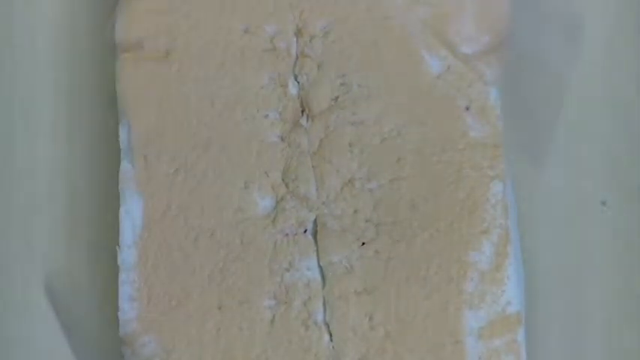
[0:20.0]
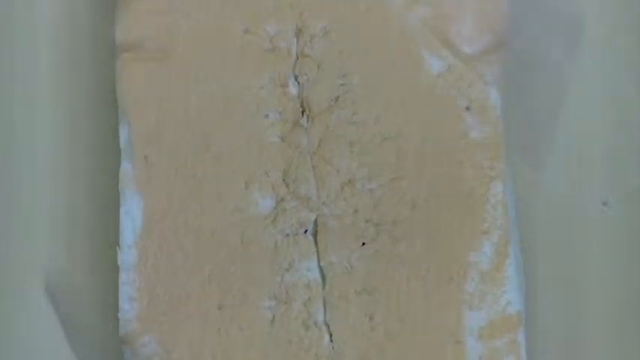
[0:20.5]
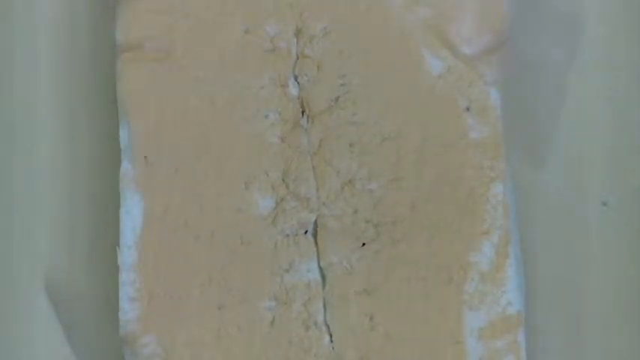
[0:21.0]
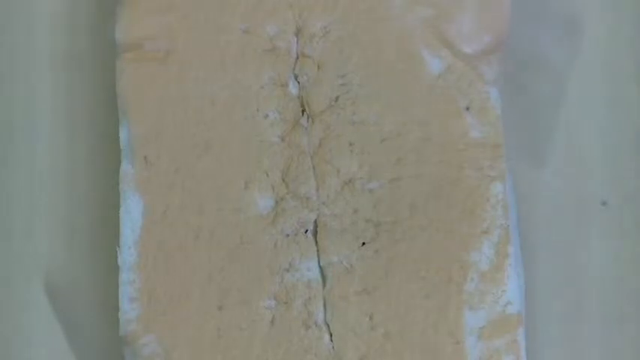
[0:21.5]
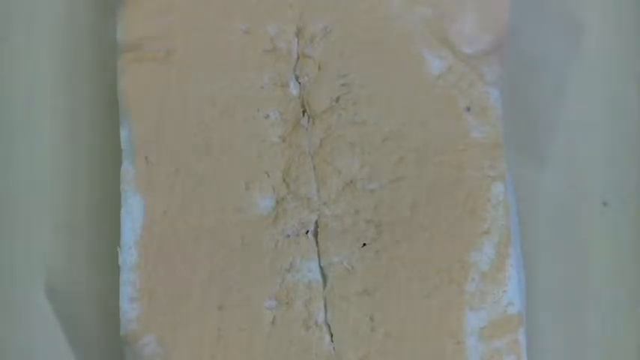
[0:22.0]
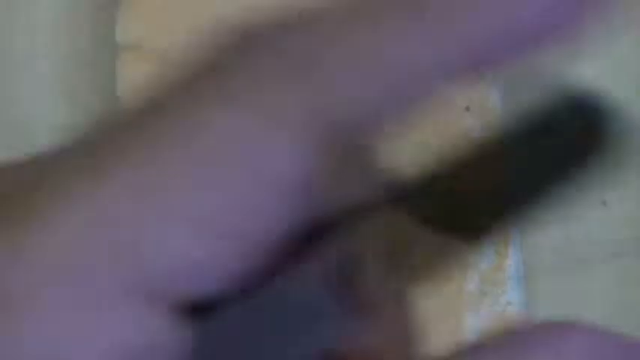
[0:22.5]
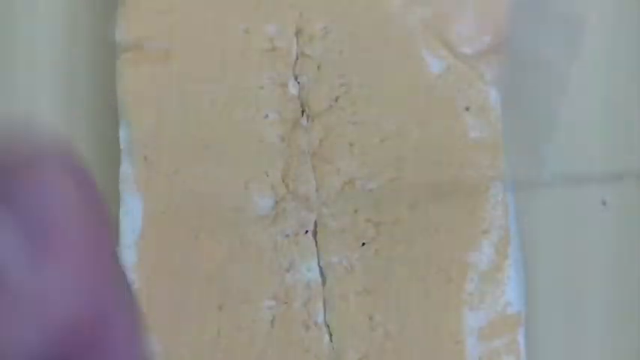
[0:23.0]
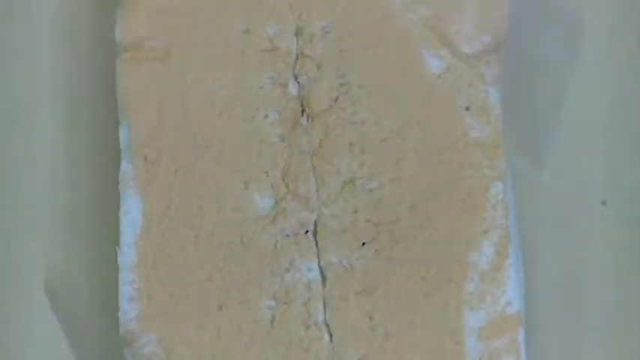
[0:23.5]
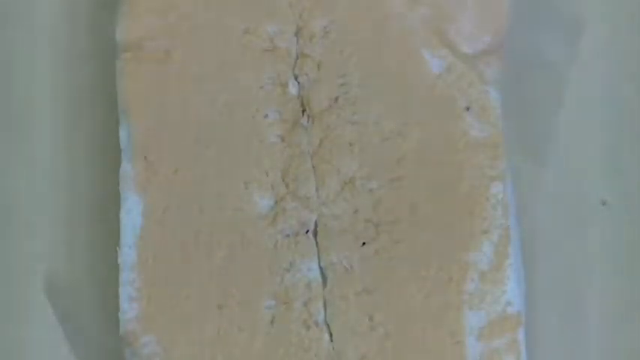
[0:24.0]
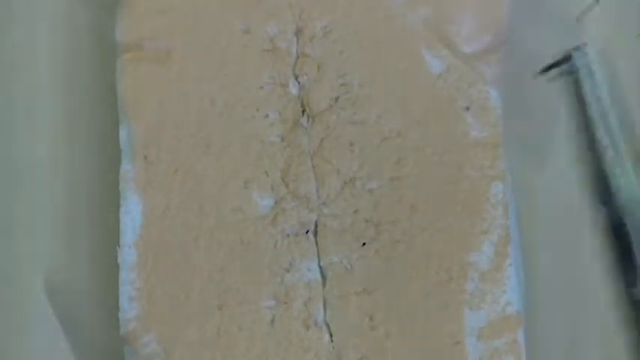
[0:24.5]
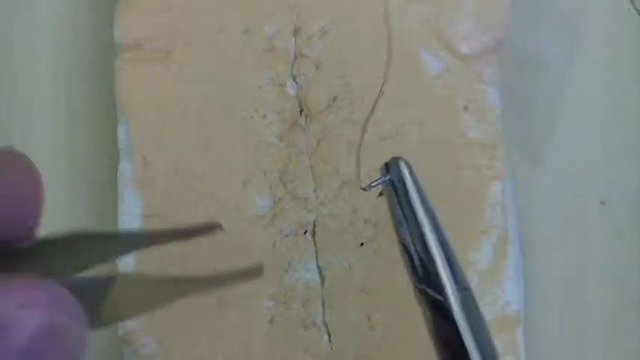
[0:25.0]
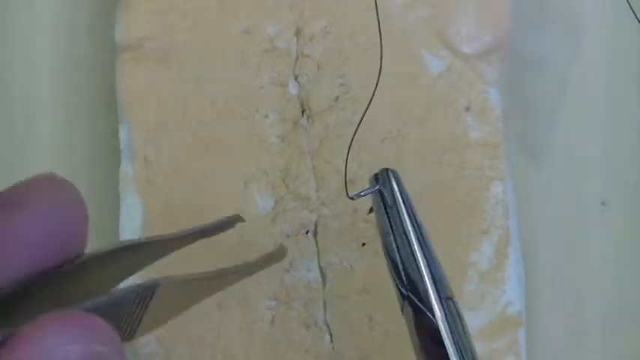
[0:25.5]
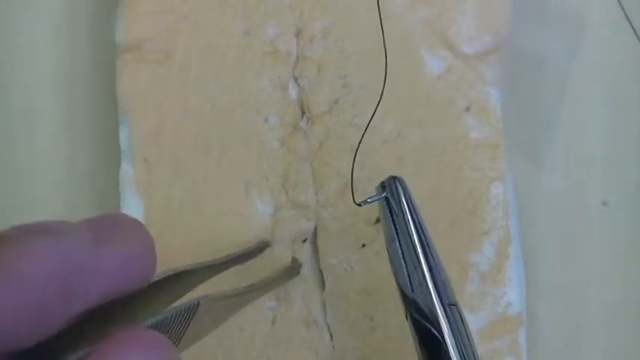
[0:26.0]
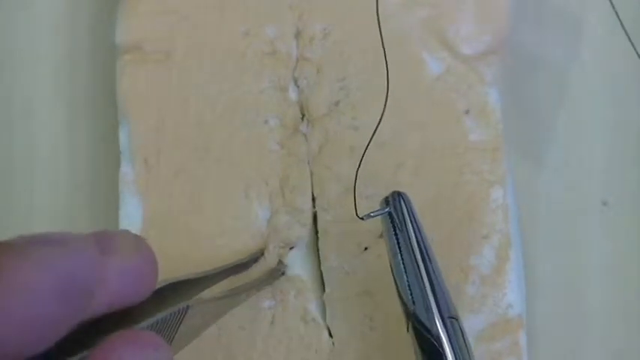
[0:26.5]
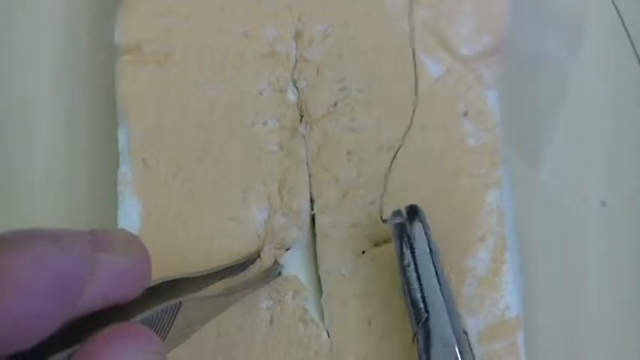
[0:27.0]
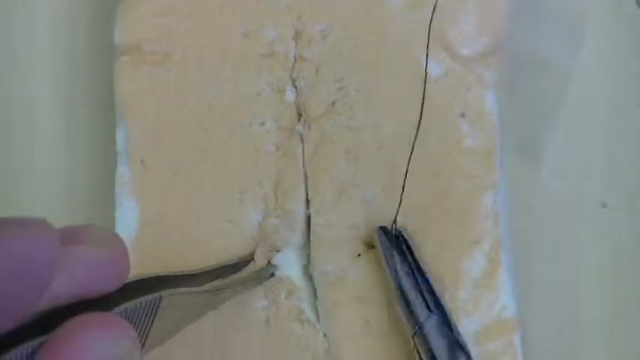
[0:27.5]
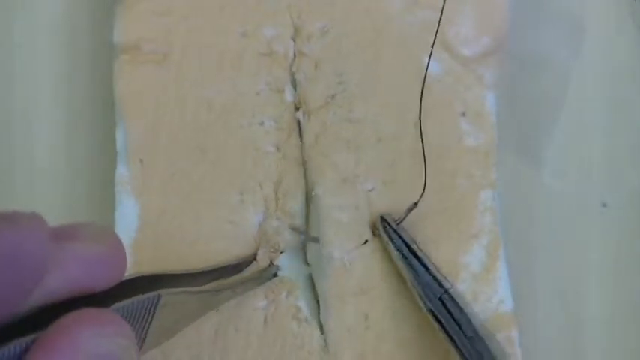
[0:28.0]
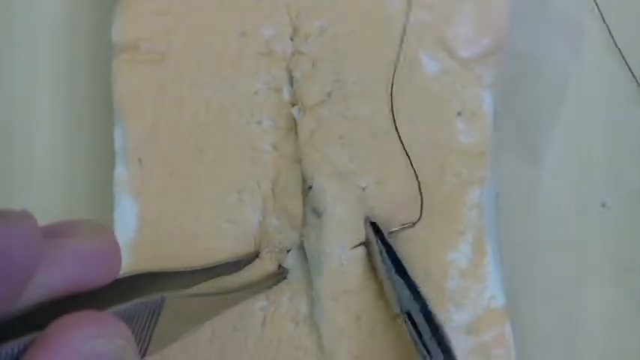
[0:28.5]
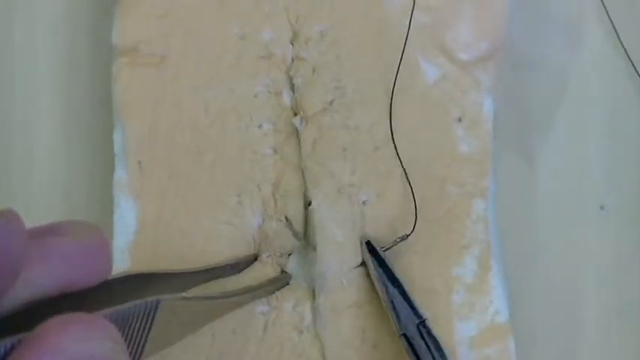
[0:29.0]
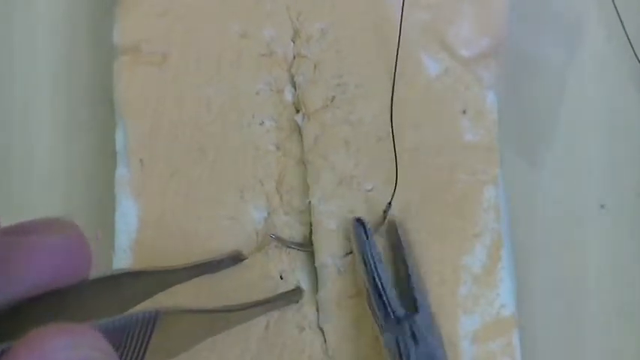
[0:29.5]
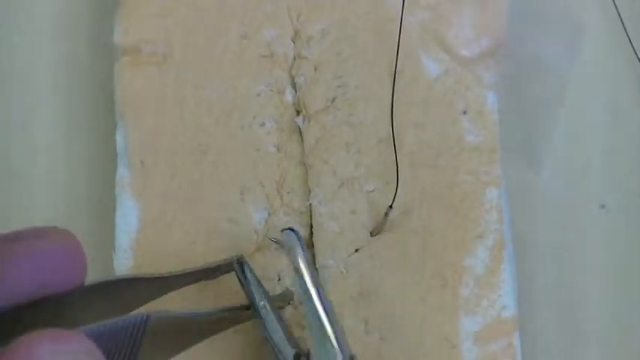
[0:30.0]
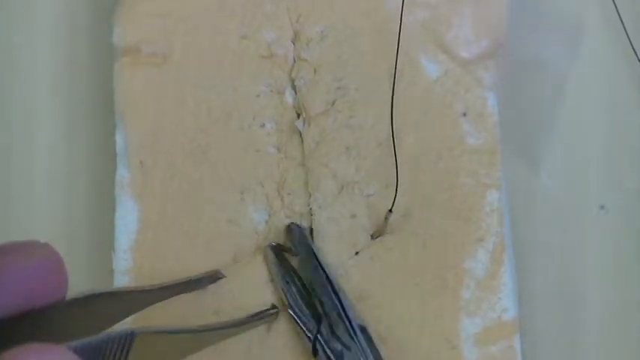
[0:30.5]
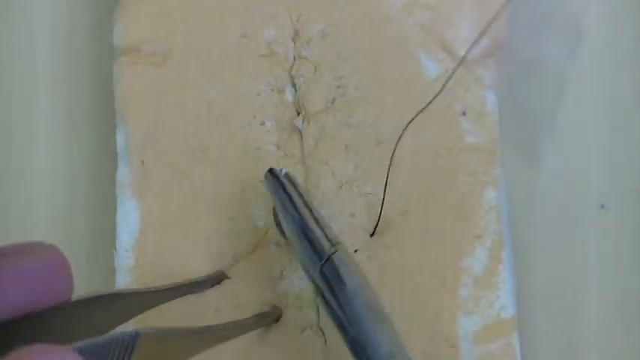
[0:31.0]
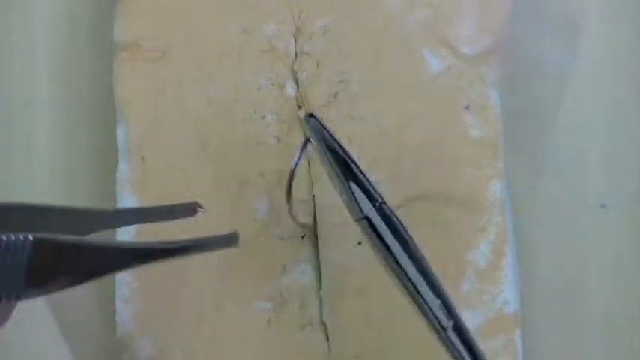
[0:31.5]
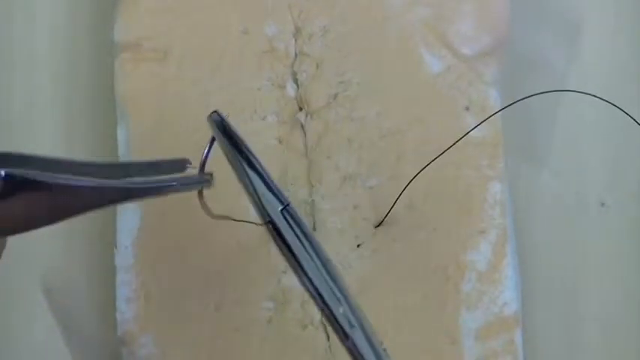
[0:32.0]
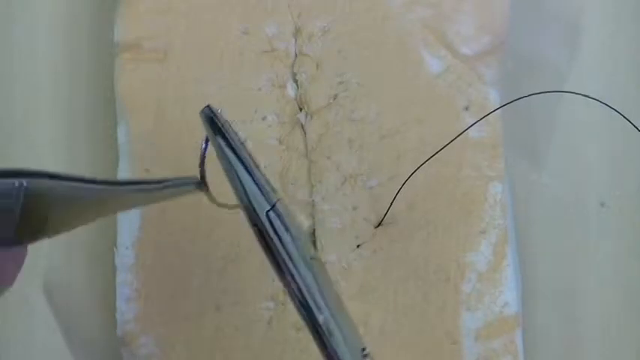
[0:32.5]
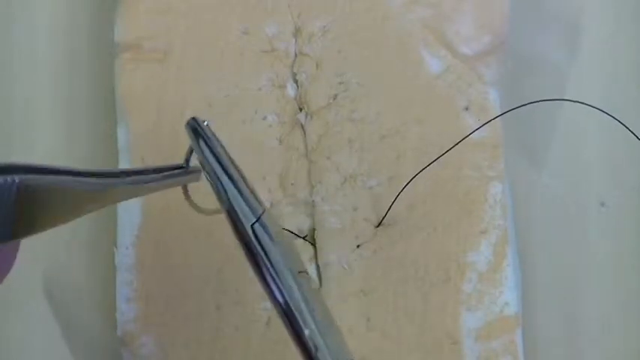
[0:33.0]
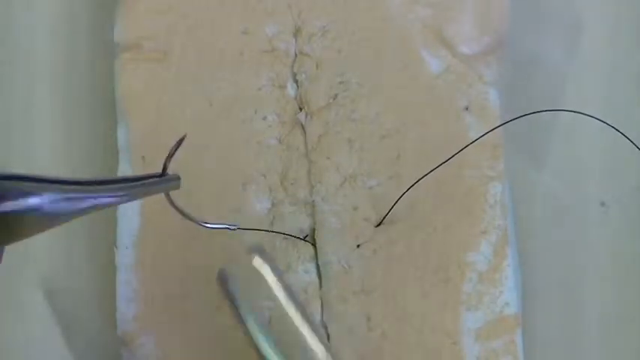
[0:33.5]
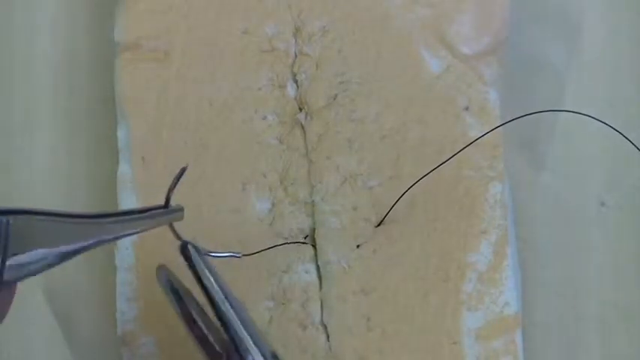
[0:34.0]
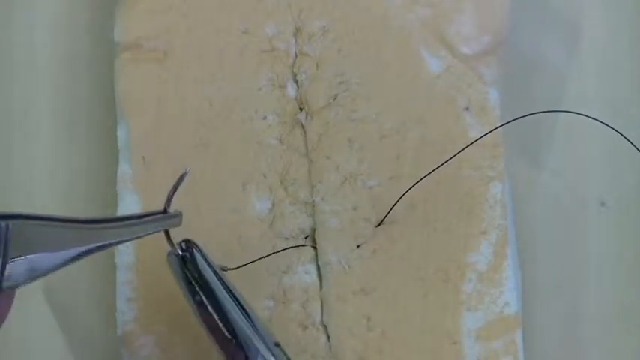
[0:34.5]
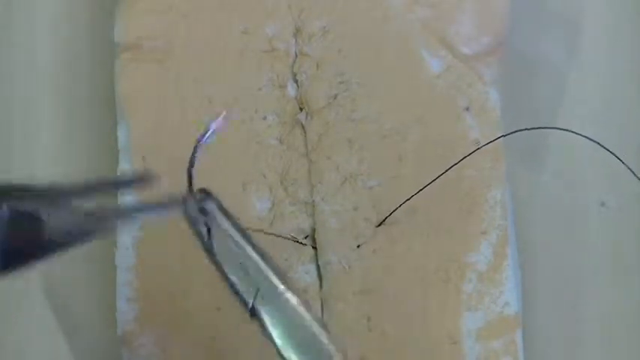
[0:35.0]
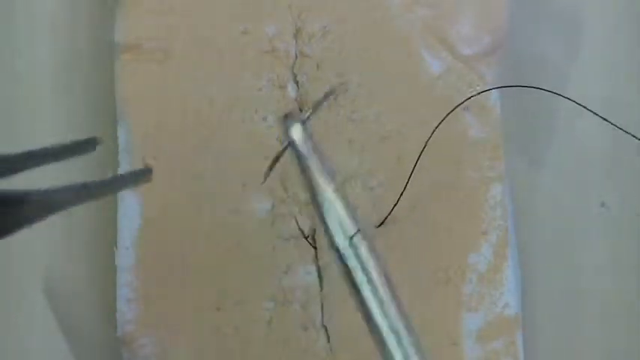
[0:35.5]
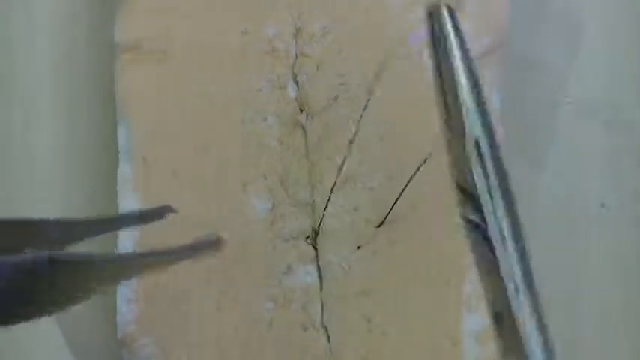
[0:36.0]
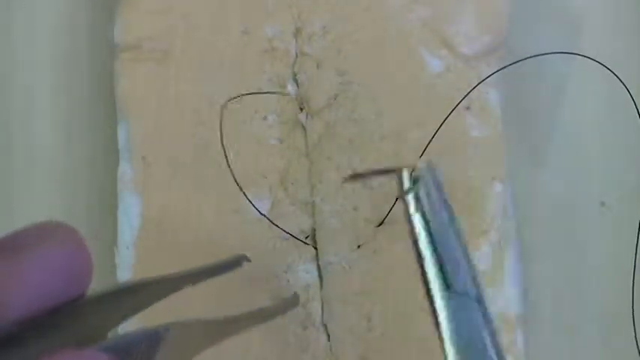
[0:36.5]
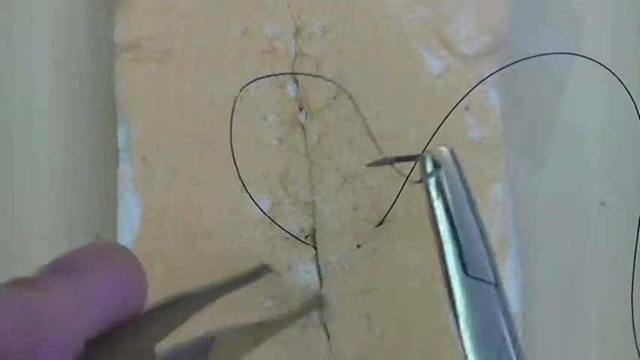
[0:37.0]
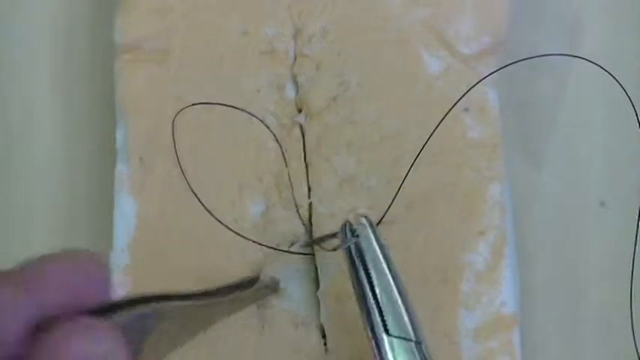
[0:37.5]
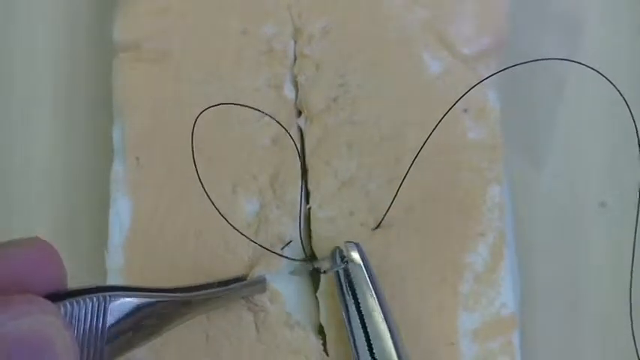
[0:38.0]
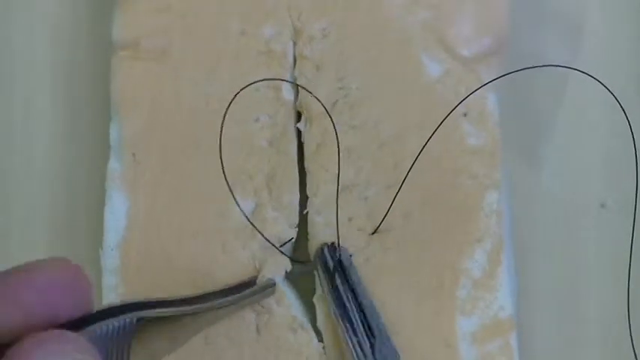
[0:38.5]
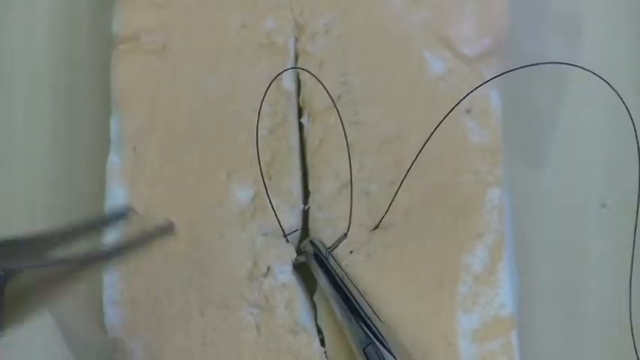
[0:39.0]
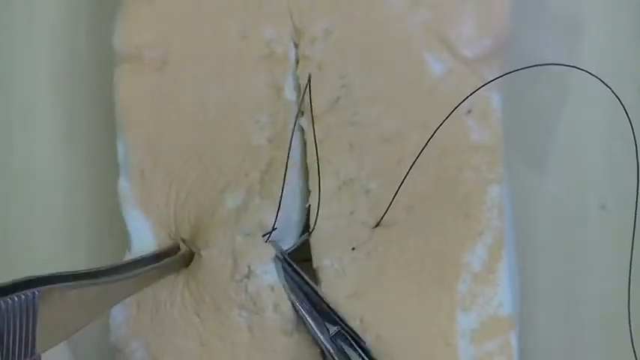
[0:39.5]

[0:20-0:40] Using one pair of forceps, the man takes out a needle and thread and uses the thread to stitch the cut in the bread-like object, probably showing how to stitch, though it is unclear whether the technique is meant for people or for ordinary objects.